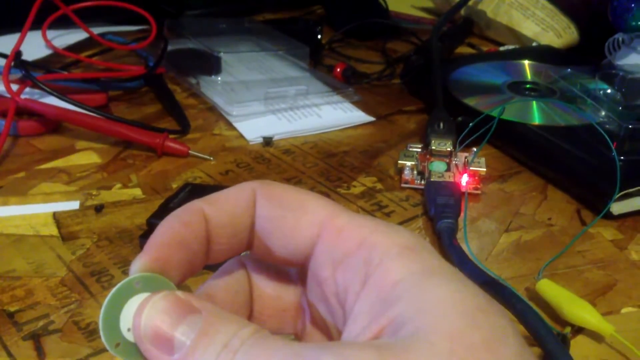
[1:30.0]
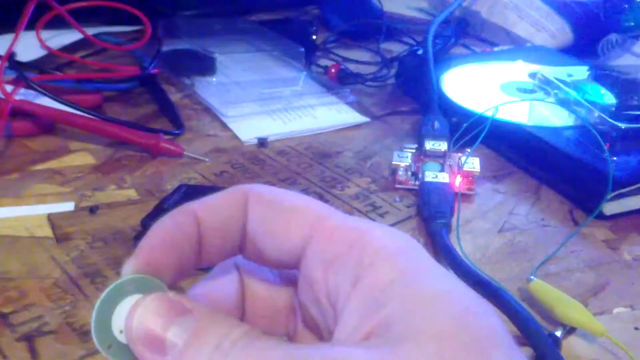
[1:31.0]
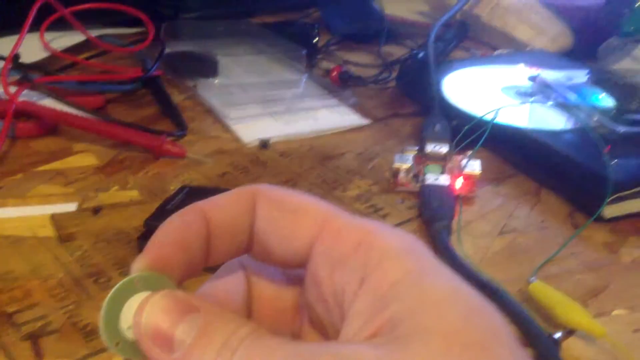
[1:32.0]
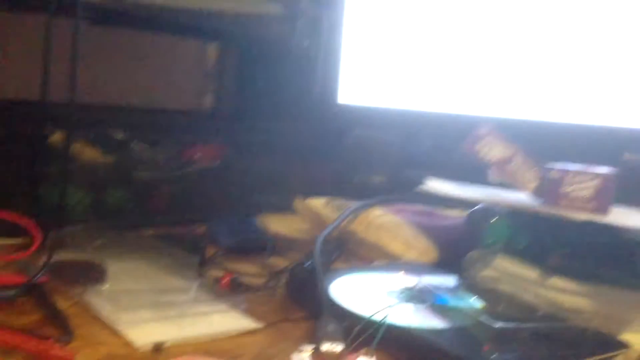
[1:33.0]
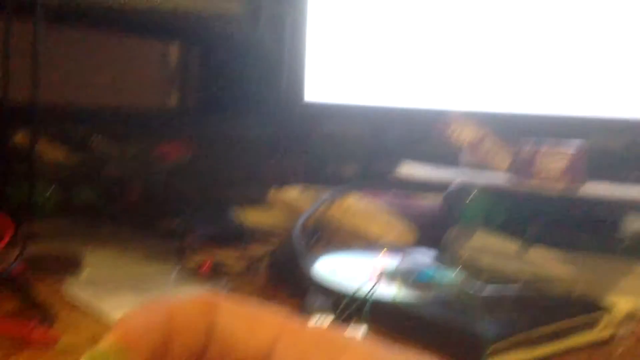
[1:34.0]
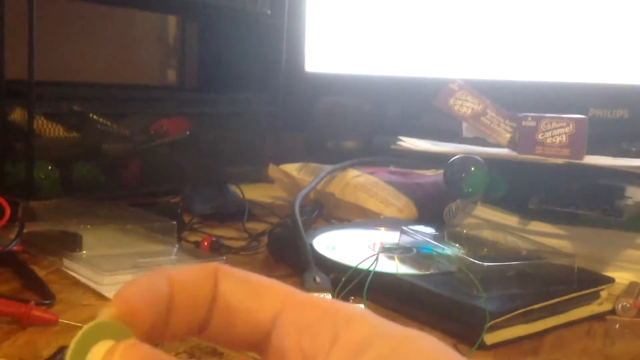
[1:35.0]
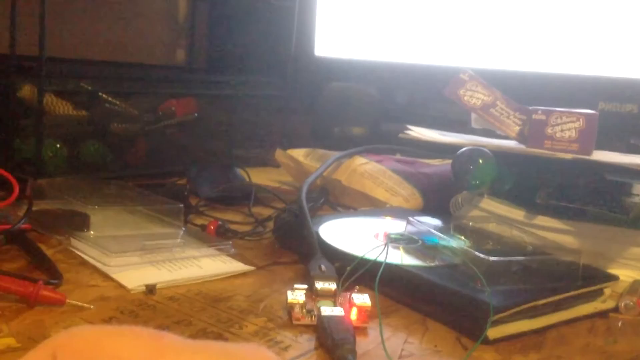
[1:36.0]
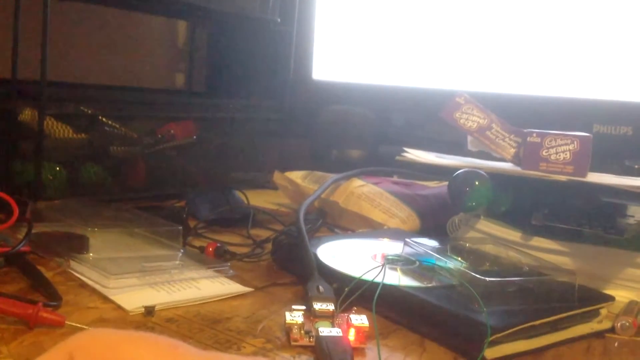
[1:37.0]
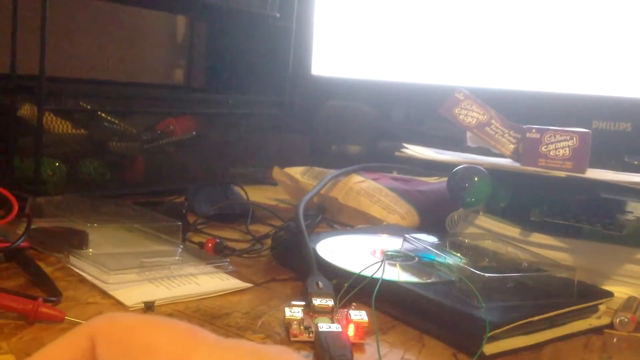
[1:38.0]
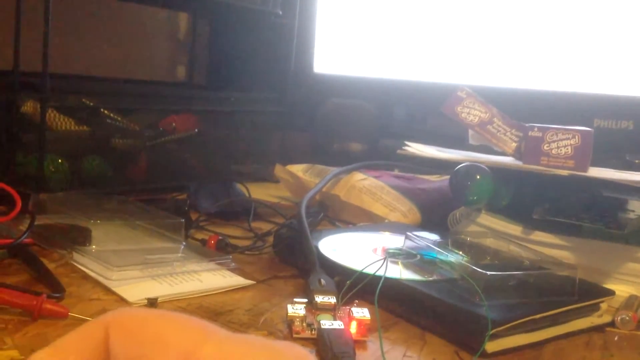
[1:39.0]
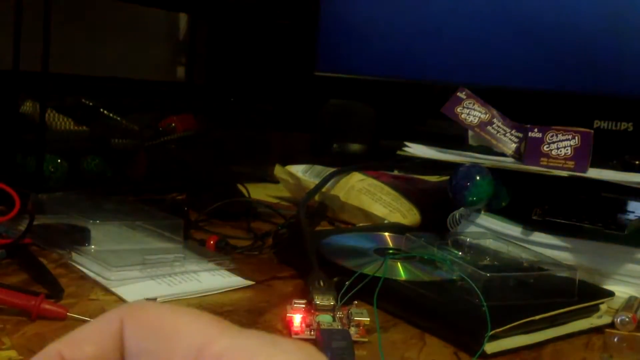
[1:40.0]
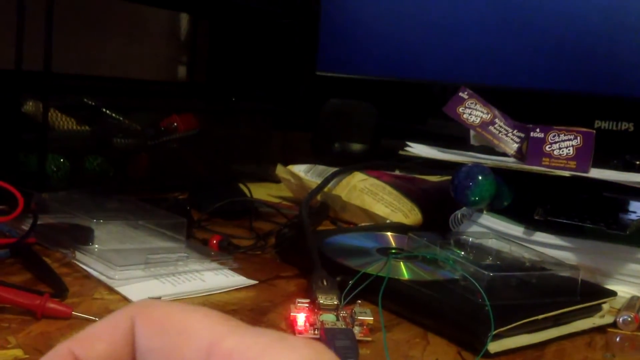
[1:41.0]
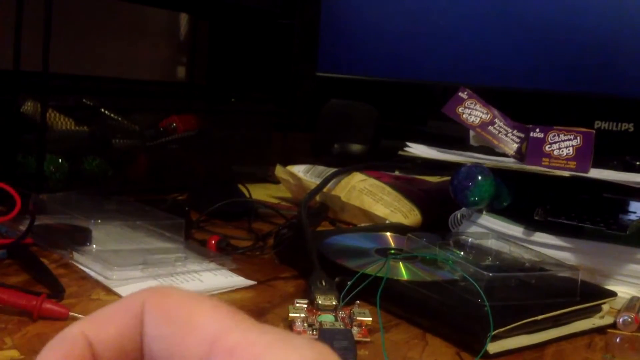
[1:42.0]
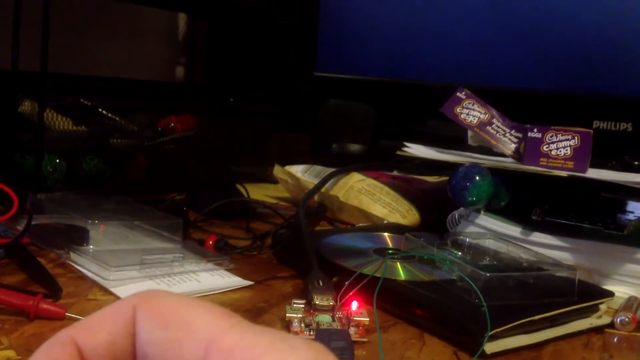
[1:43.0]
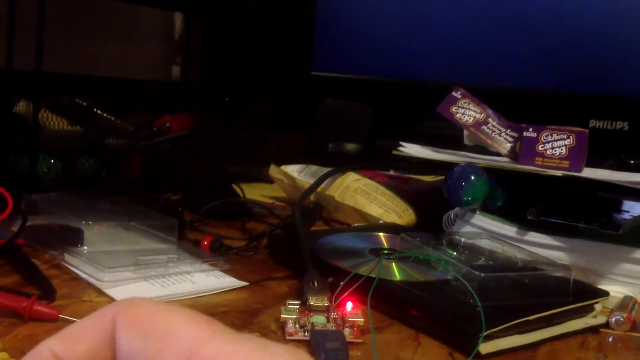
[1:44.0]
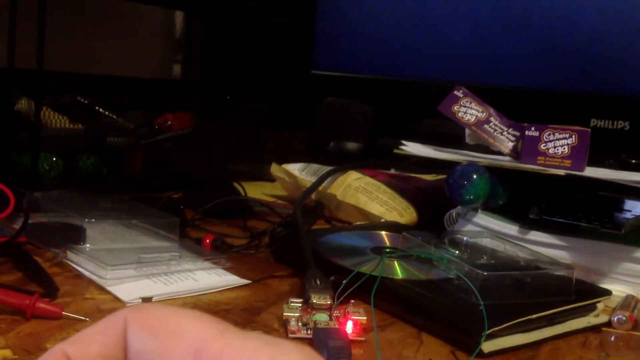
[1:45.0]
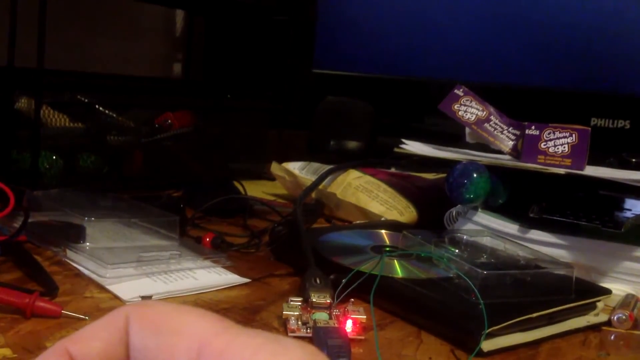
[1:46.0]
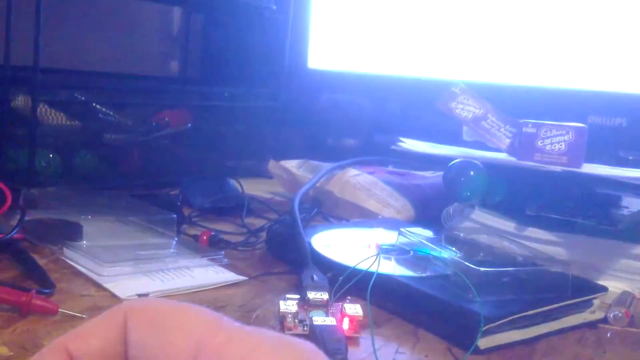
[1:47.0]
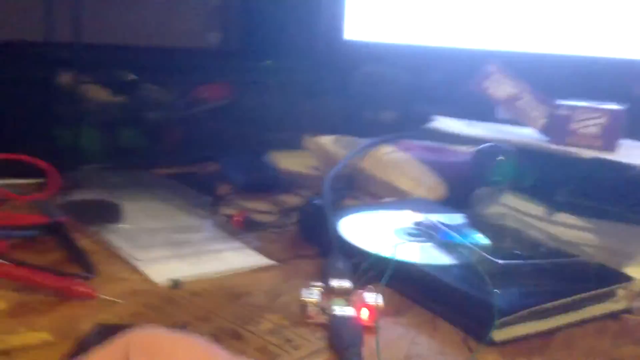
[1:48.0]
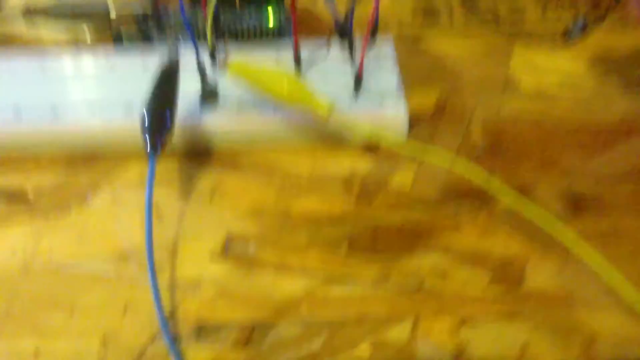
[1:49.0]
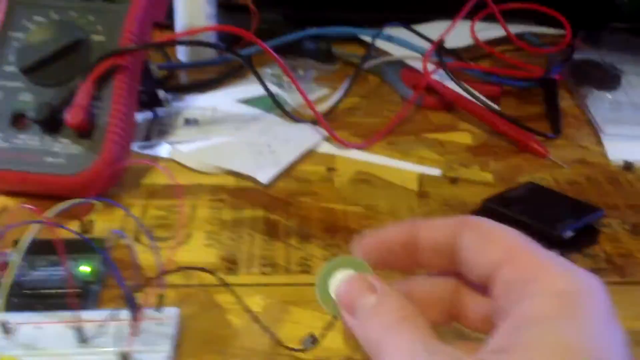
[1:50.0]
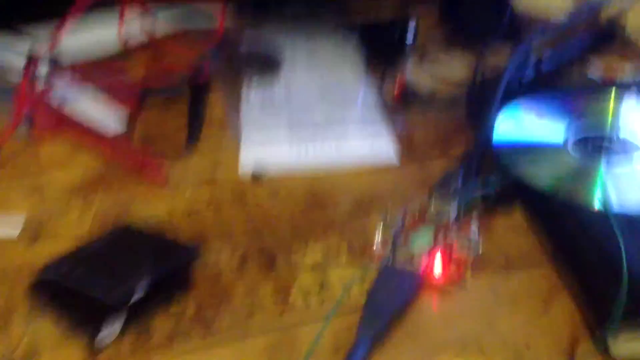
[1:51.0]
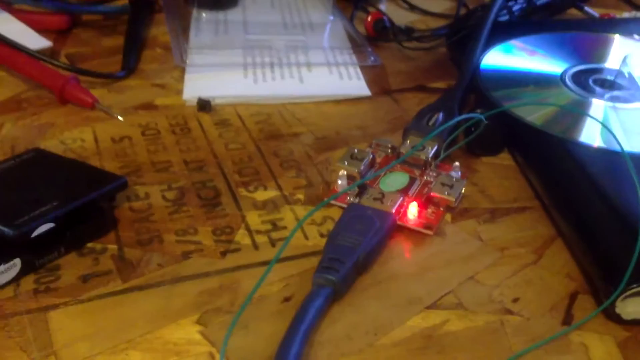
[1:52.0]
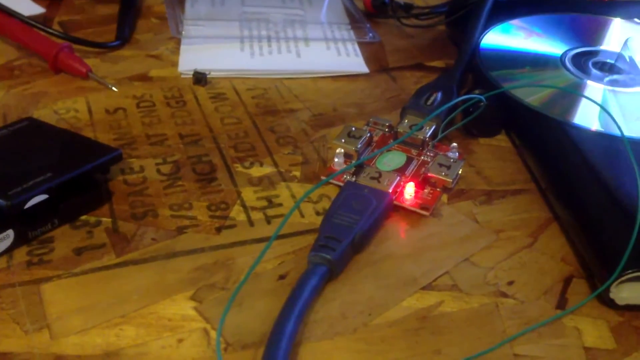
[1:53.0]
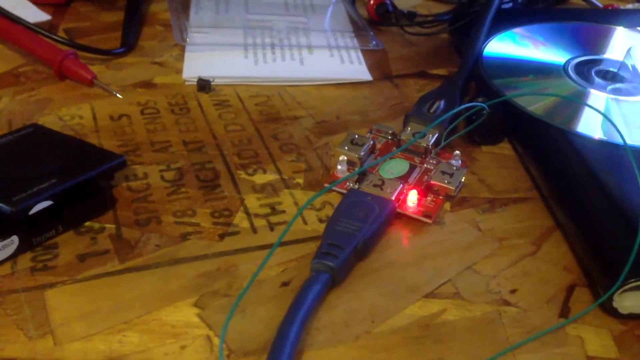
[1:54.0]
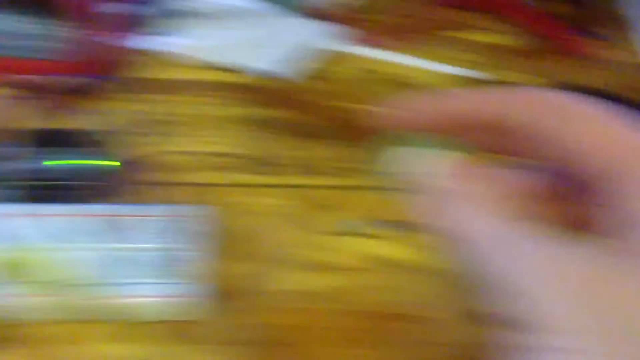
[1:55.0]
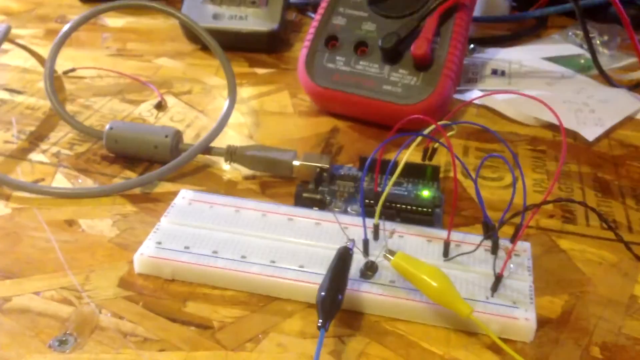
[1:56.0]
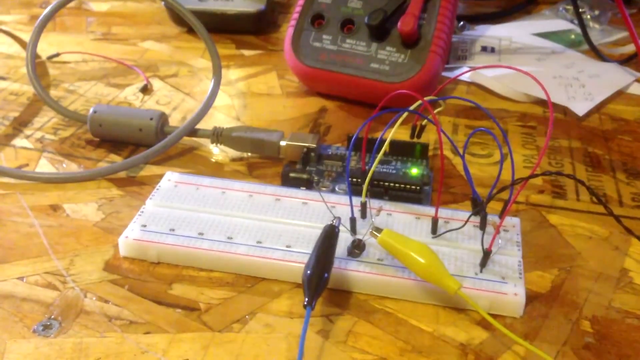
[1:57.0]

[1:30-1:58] When the button is pressed, the light on the small panel changes from red. The button powers on something like a TV screen, which shows a brighter light; after the button is pressed the screen goes off, and it comes on again after the button is pressed again. The position of the small panel device on the table, with the number 10123, remains the same. The button controls the device through cables looped from one place to another, with a fuse and a panel device.